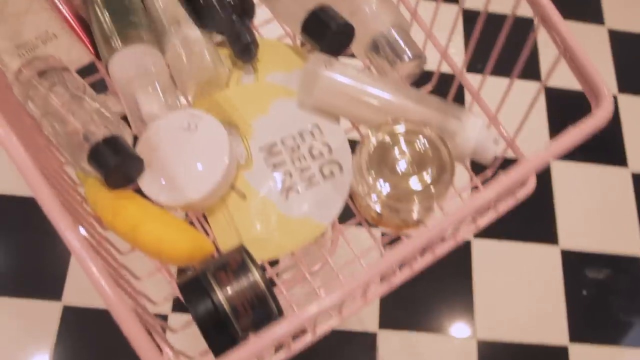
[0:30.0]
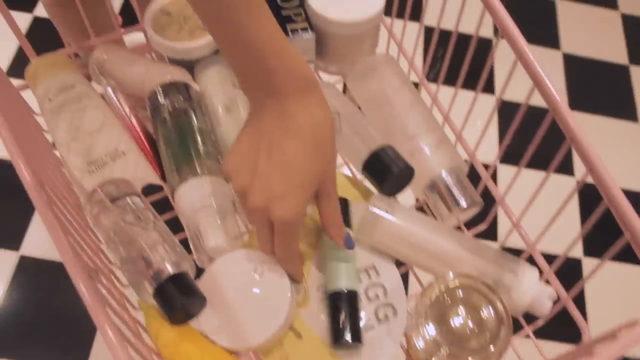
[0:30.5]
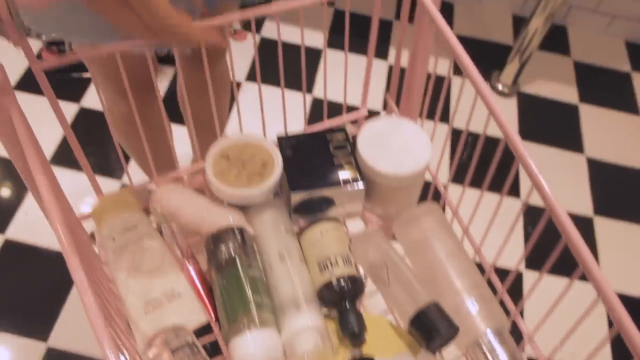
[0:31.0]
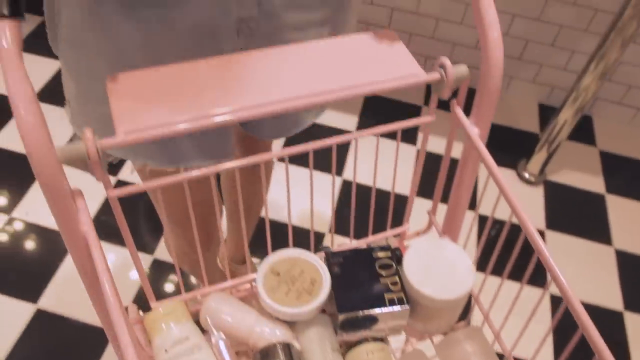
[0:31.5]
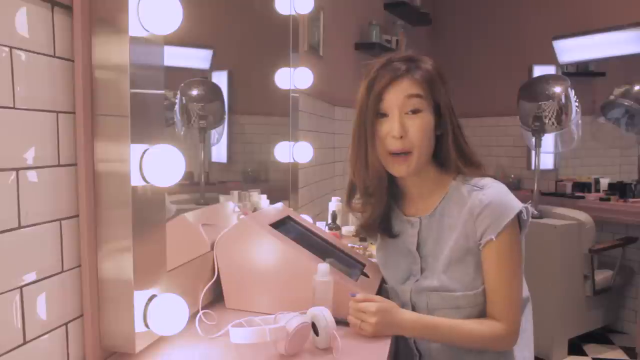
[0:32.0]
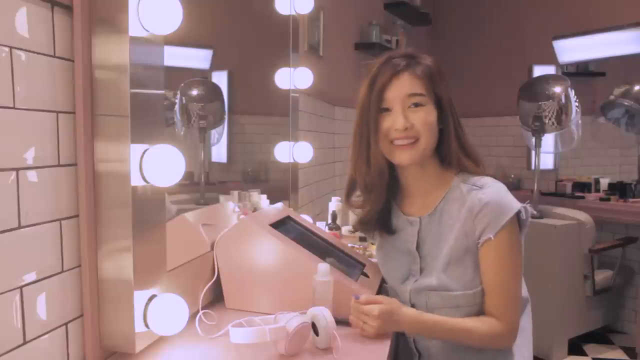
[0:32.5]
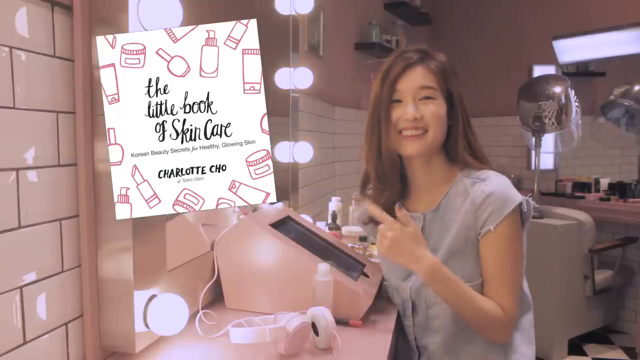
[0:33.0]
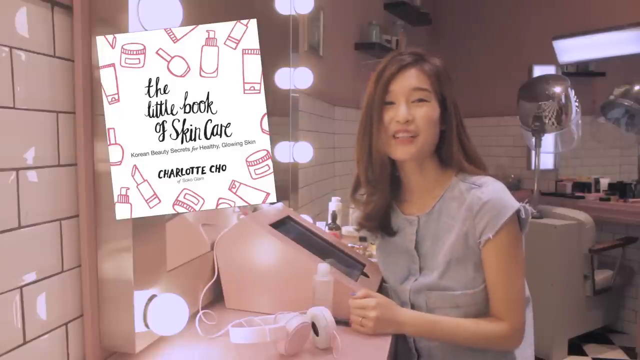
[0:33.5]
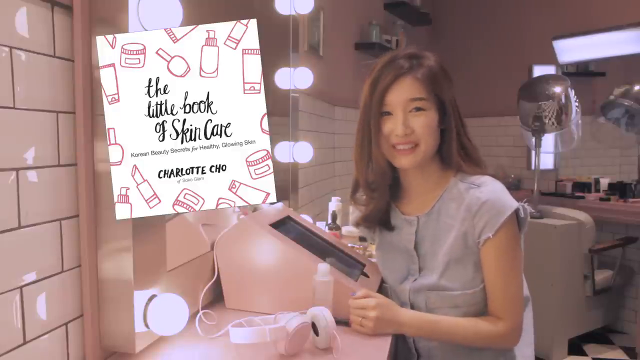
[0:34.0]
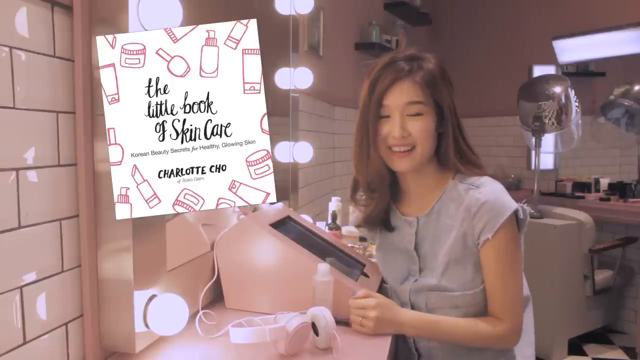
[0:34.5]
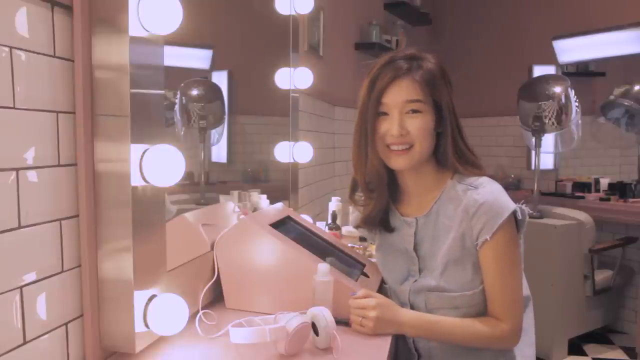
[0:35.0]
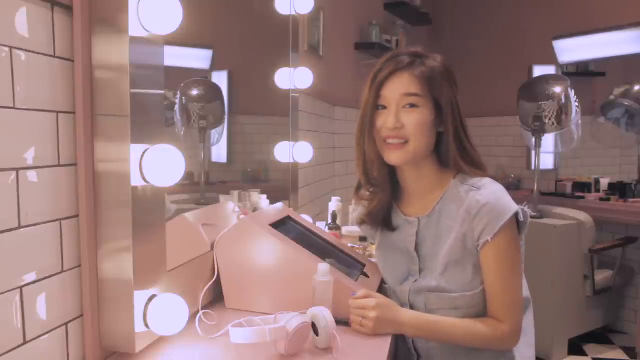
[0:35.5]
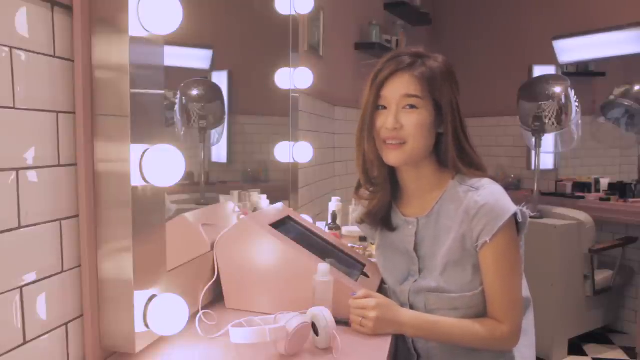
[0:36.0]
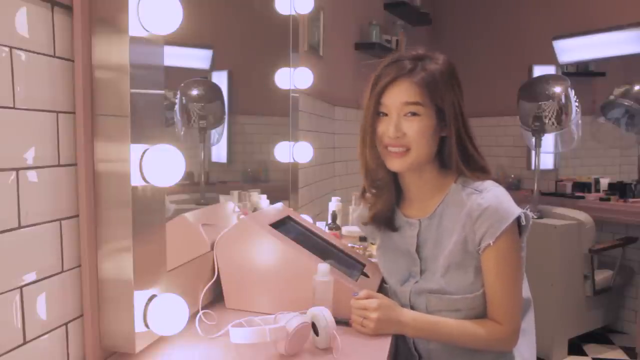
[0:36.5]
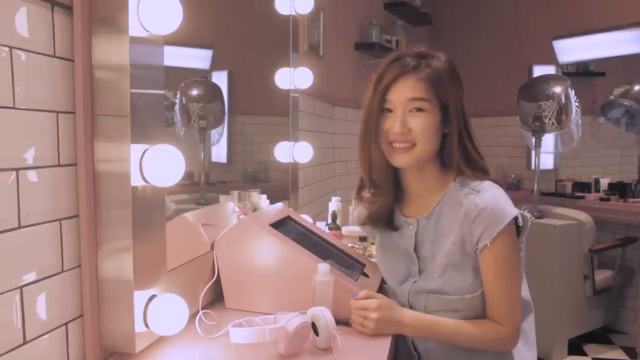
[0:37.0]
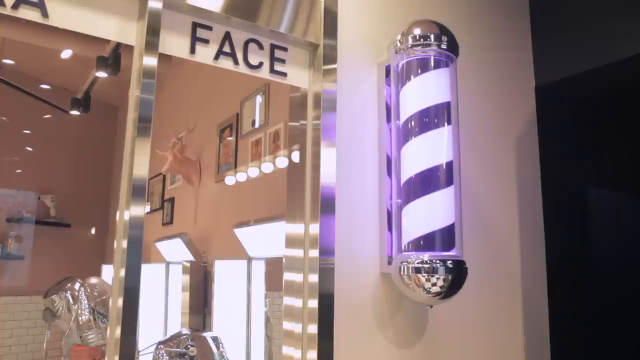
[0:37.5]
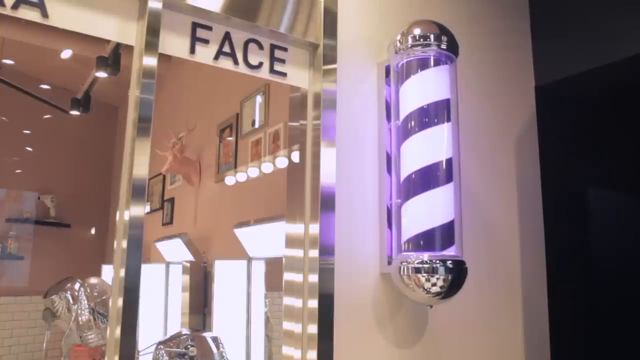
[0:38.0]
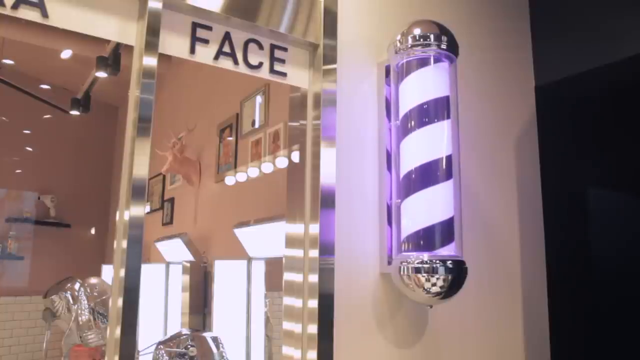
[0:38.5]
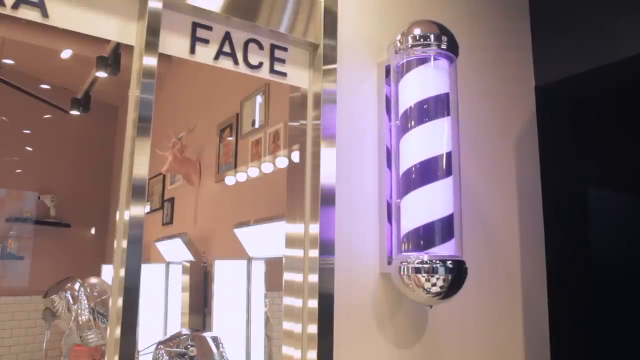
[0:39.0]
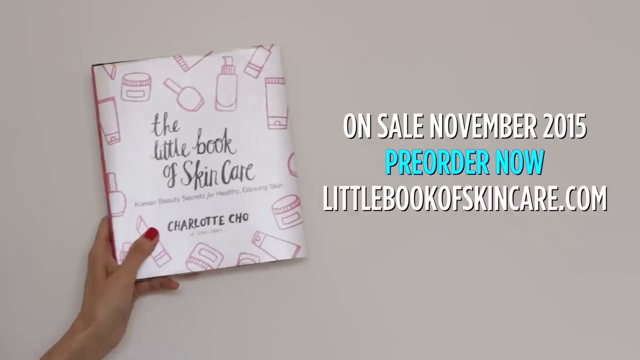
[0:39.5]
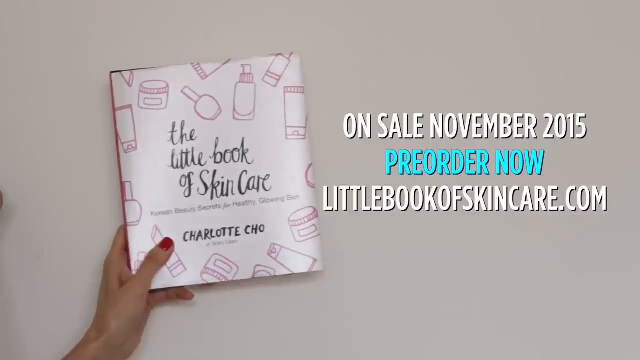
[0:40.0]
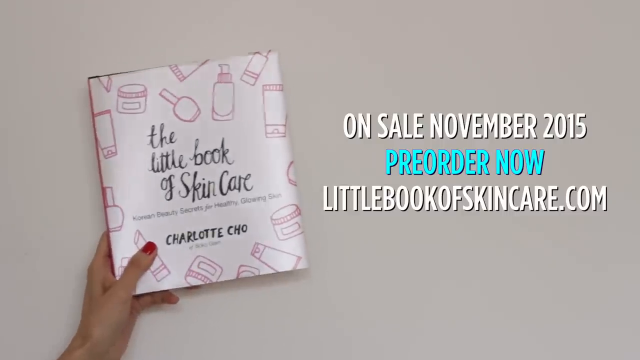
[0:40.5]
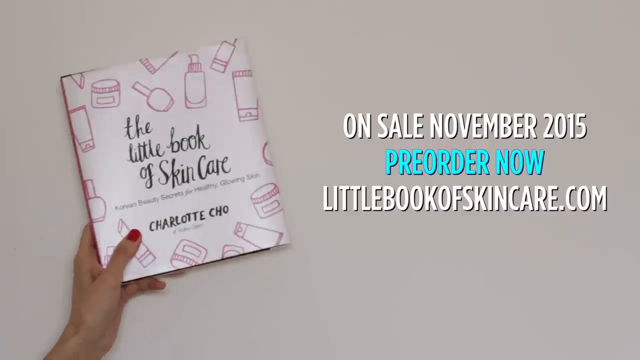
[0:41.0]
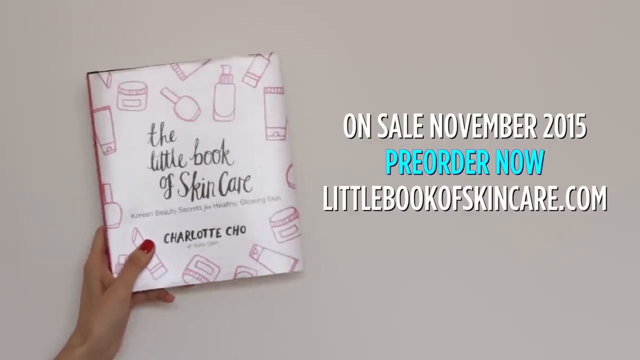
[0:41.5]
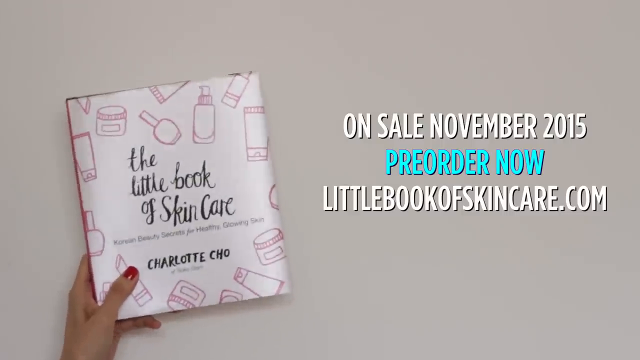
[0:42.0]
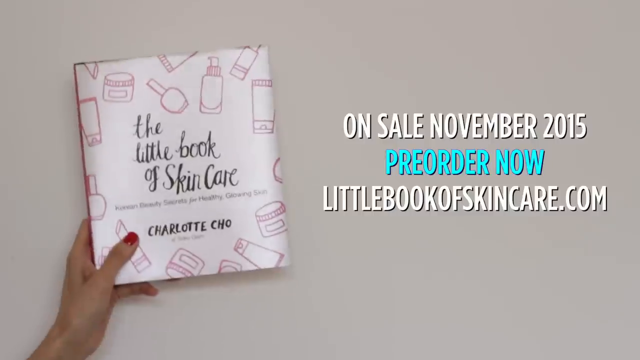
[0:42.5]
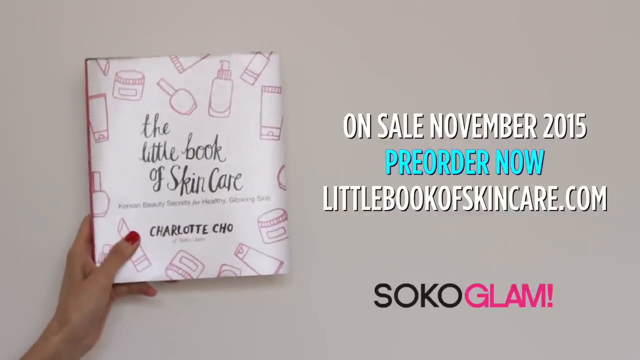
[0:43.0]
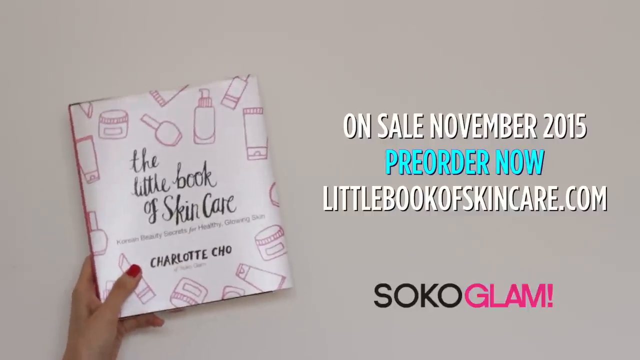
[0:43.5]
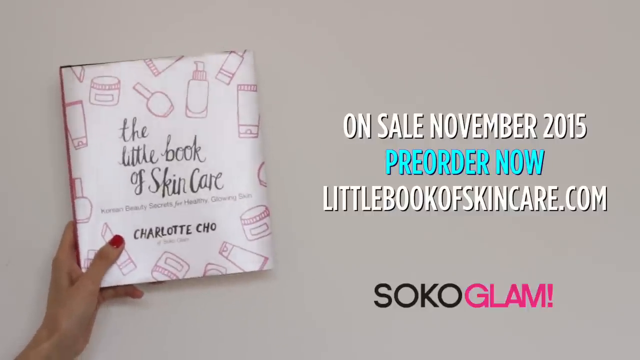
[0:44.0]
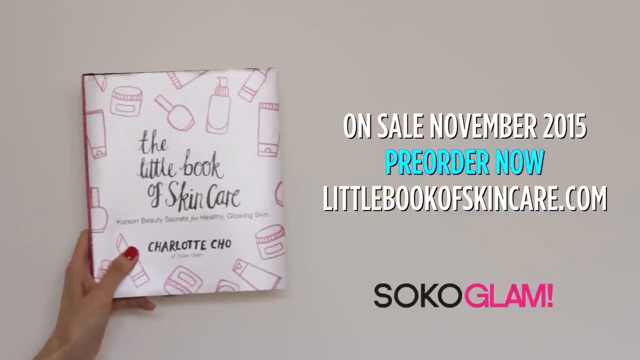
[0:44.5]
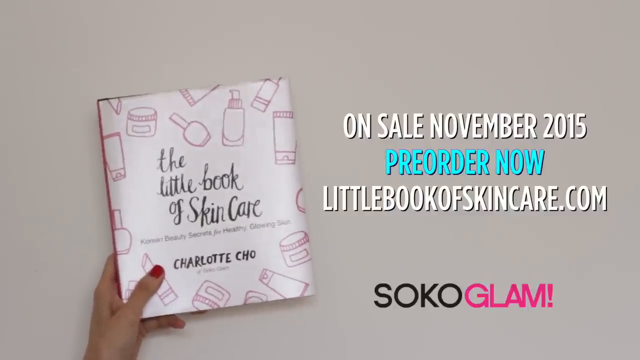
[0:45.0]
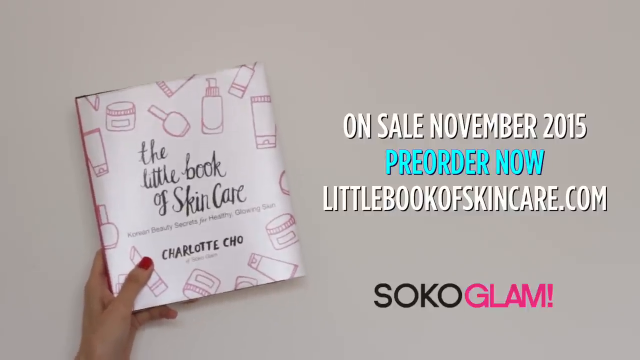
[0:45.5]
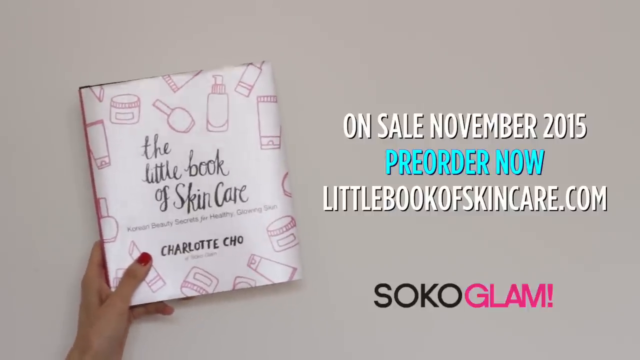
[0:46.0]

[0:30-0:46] The woman sits on a chair in front of a mirror that has lights on the side. She shows products that can be used for skincare. Among the products sold is an egg cream mask, the white mask she was wearing earlier. The products in the salon are for lips, face, makeup, eyes and mascara.